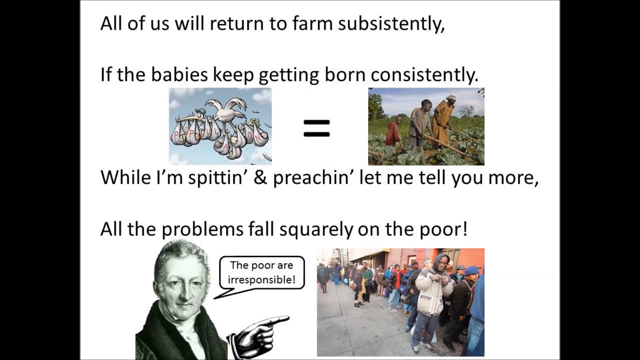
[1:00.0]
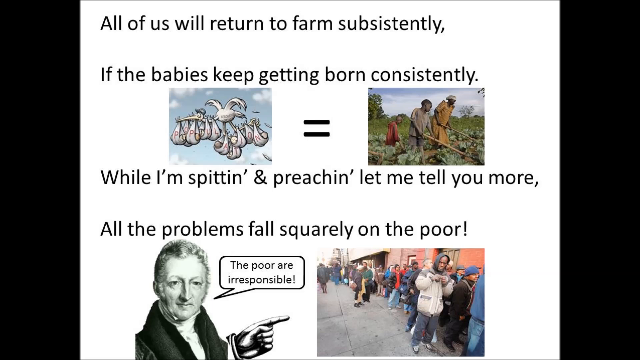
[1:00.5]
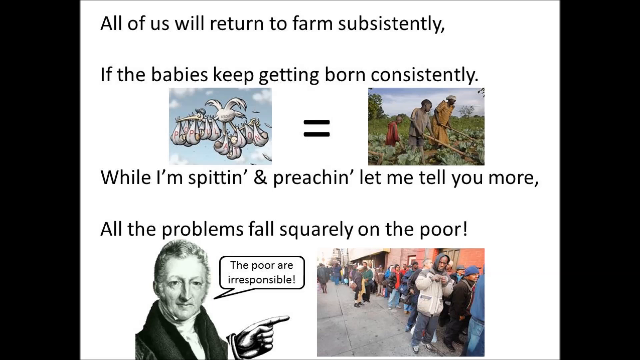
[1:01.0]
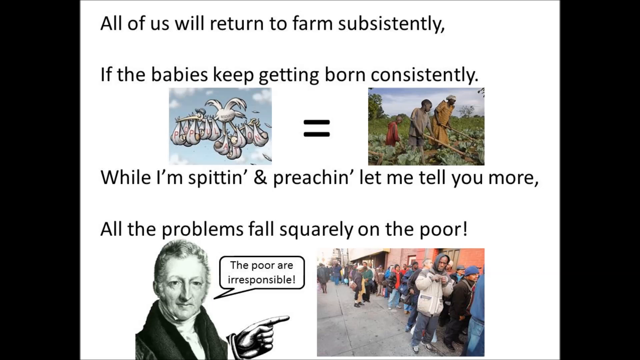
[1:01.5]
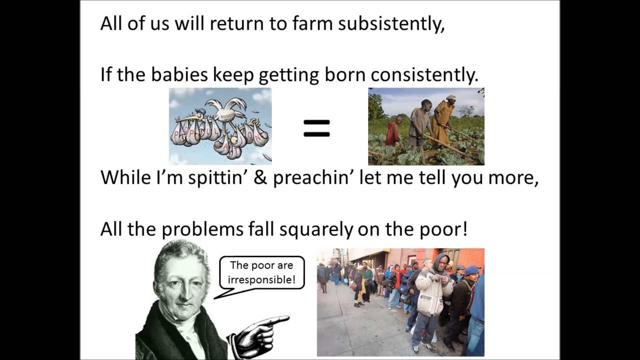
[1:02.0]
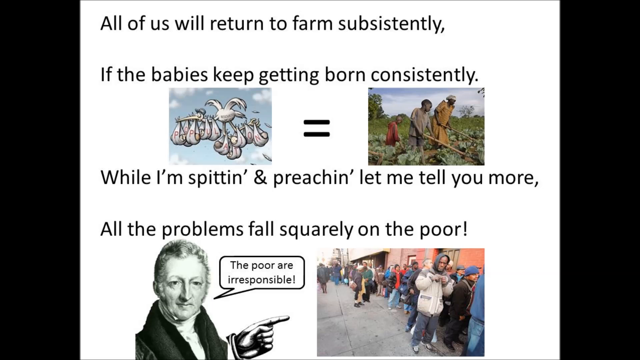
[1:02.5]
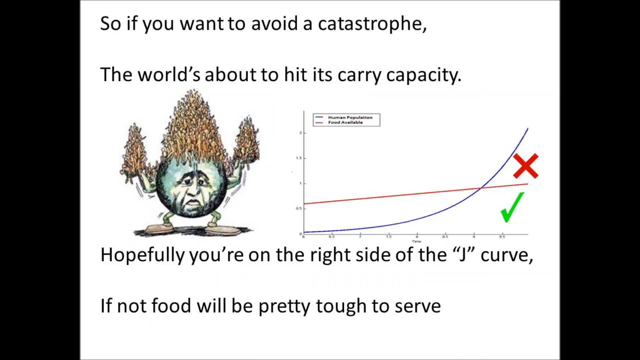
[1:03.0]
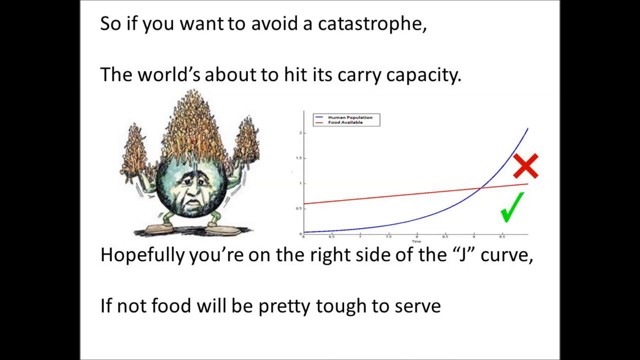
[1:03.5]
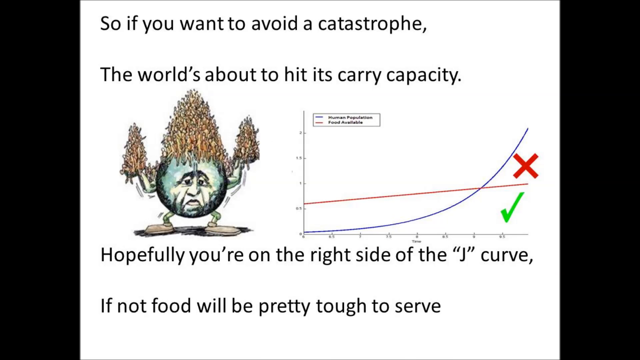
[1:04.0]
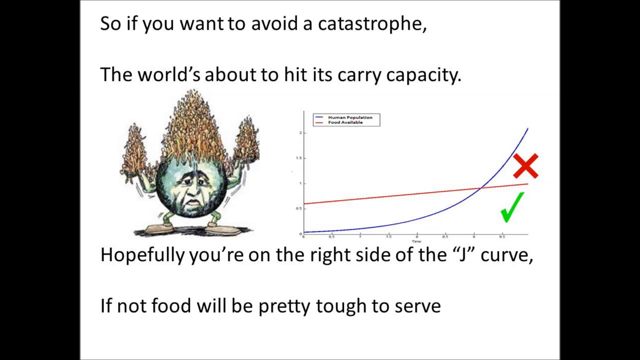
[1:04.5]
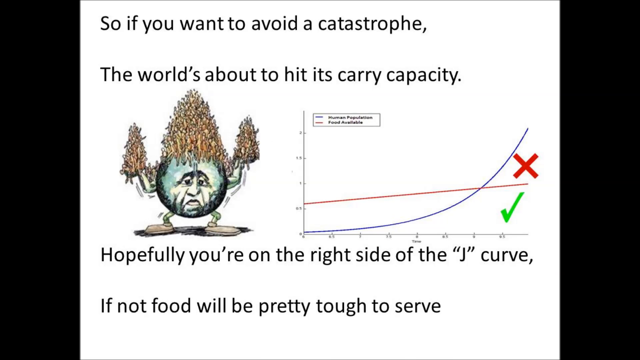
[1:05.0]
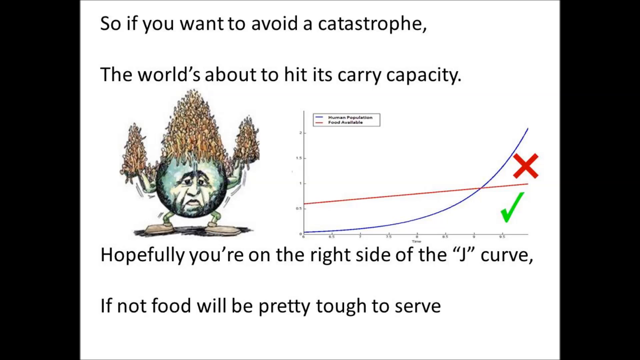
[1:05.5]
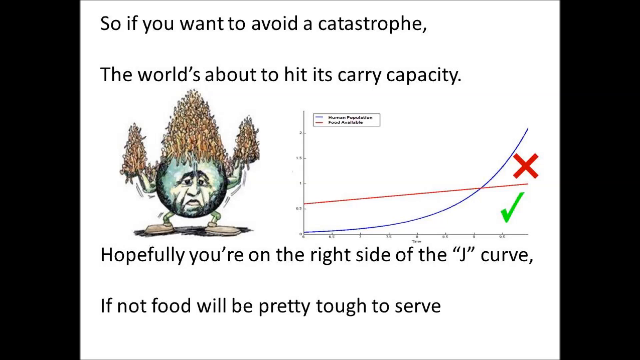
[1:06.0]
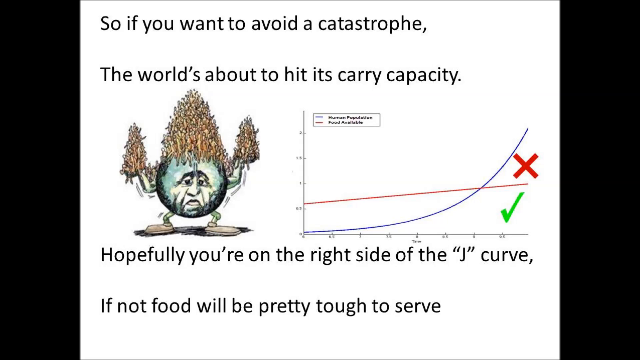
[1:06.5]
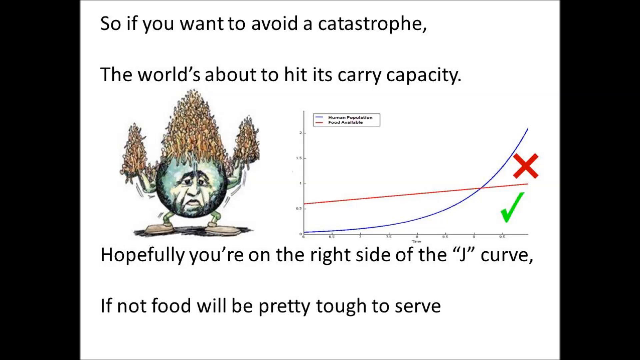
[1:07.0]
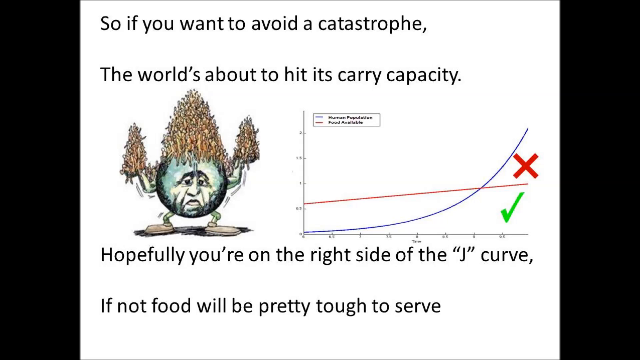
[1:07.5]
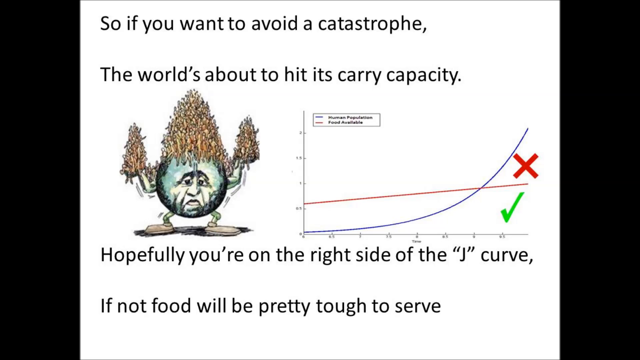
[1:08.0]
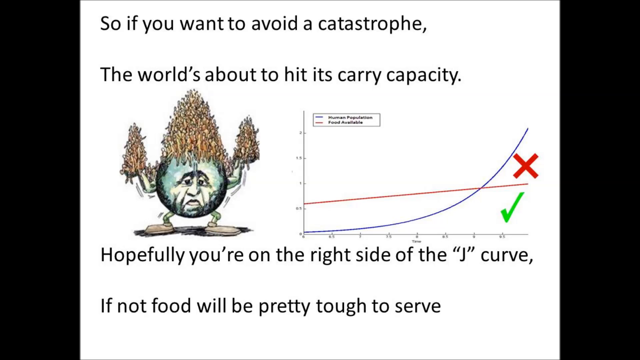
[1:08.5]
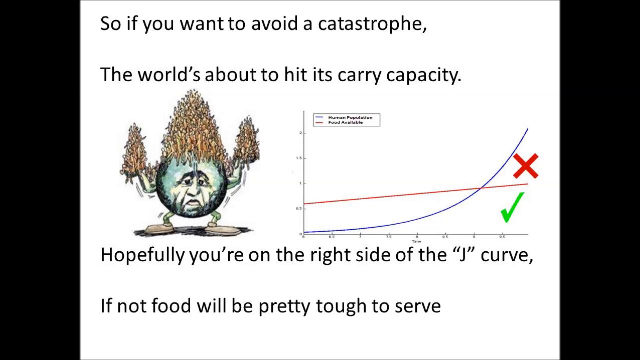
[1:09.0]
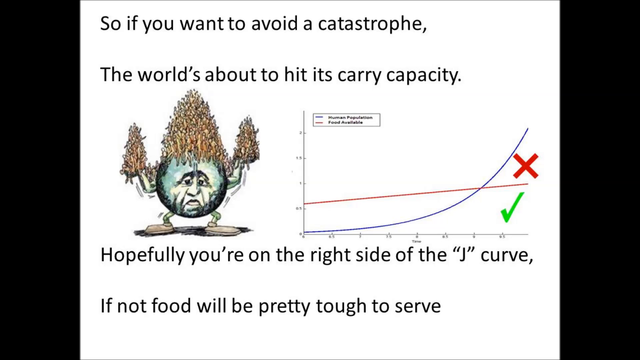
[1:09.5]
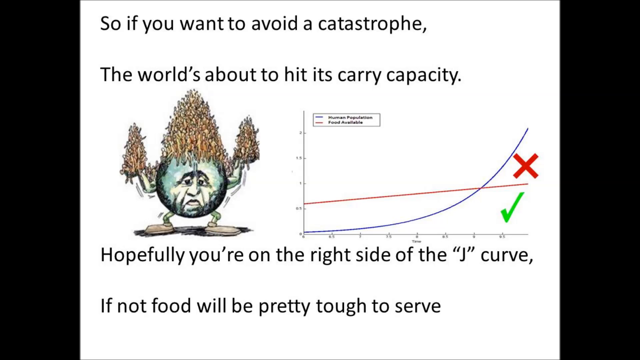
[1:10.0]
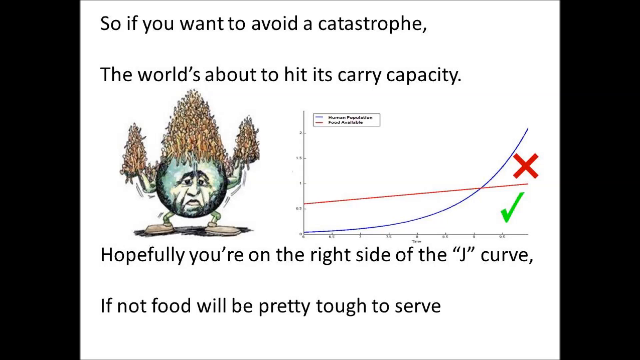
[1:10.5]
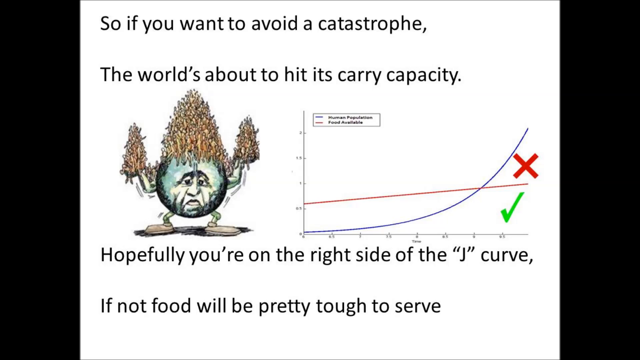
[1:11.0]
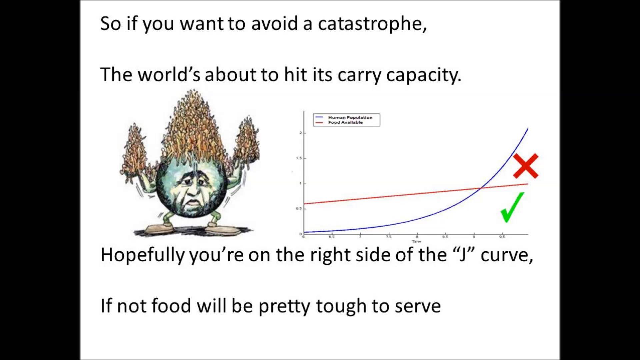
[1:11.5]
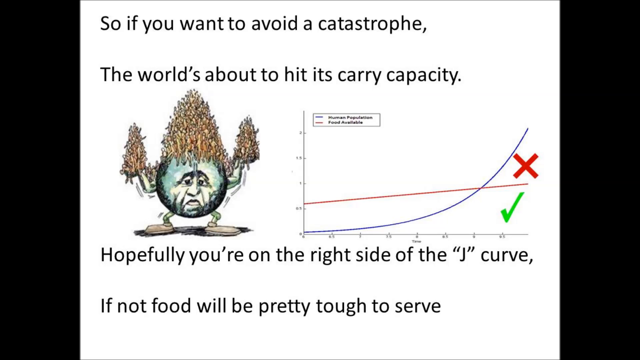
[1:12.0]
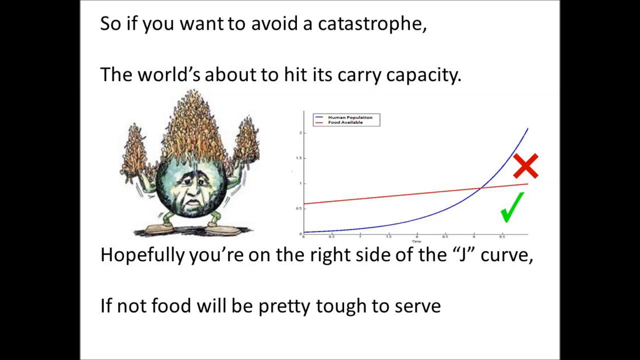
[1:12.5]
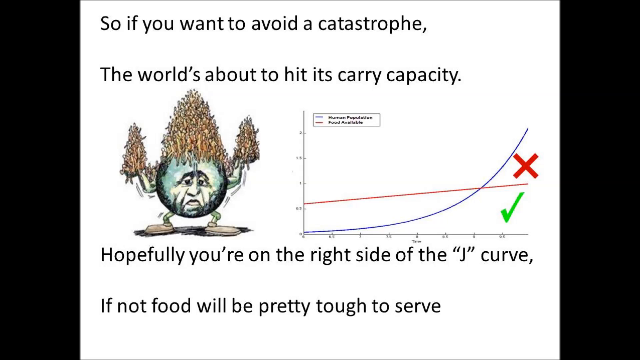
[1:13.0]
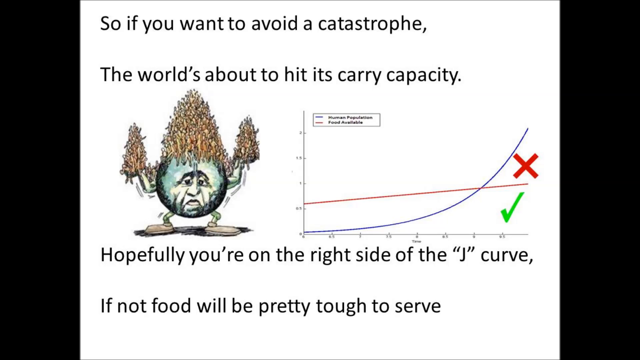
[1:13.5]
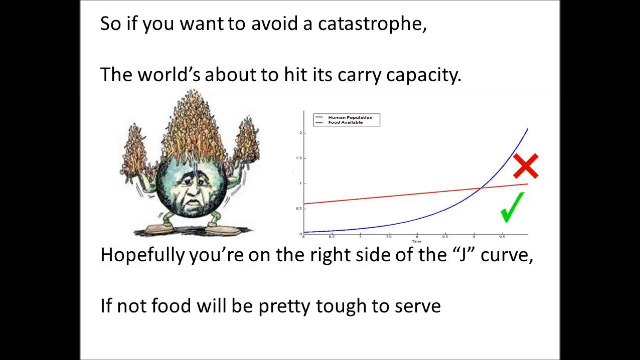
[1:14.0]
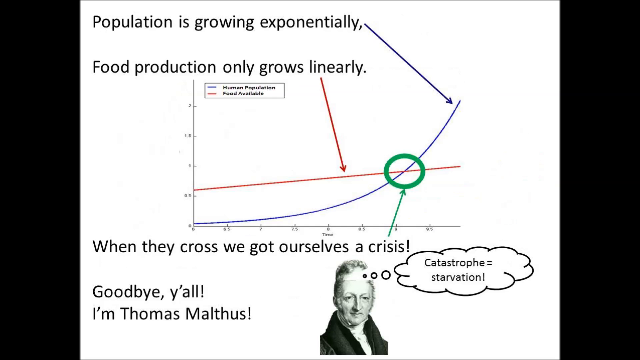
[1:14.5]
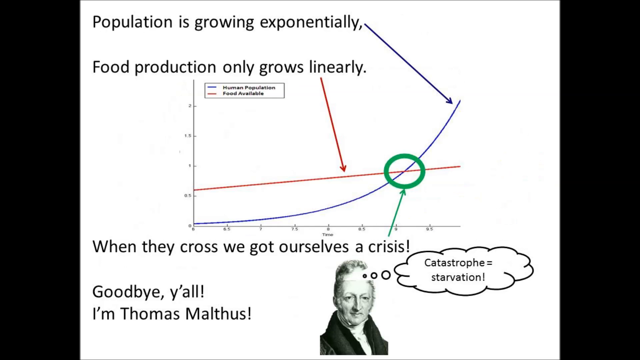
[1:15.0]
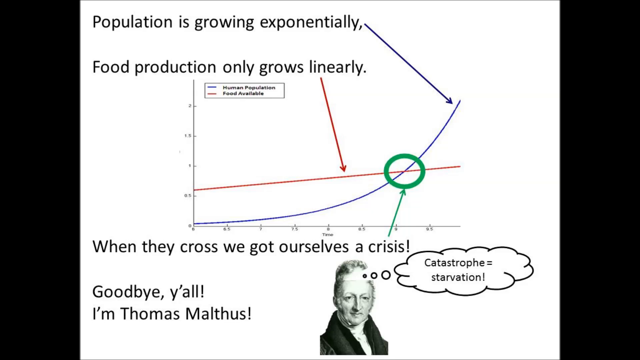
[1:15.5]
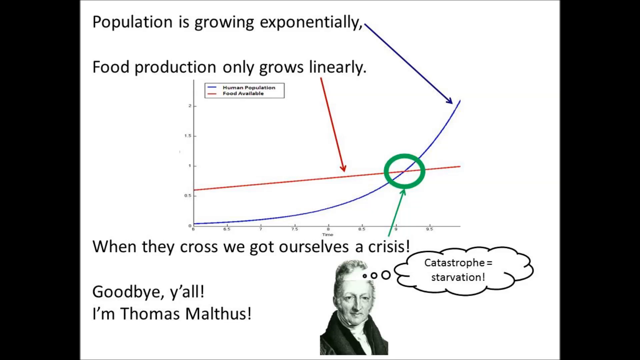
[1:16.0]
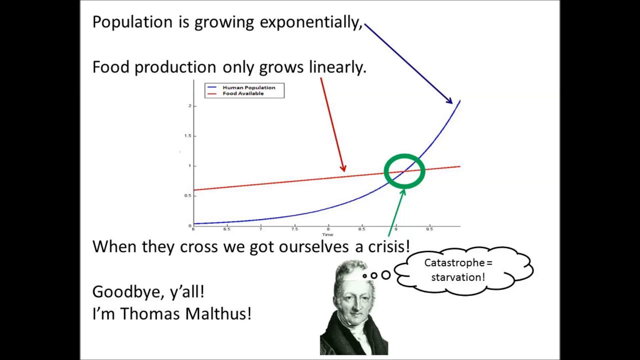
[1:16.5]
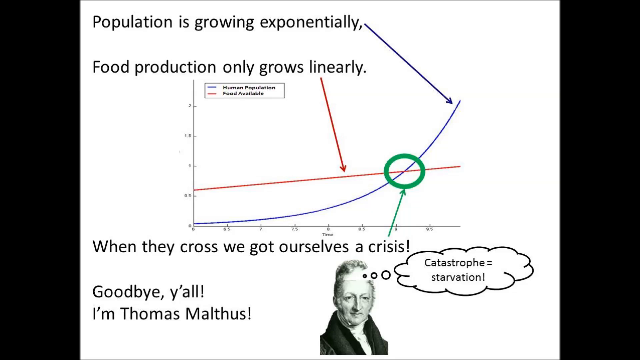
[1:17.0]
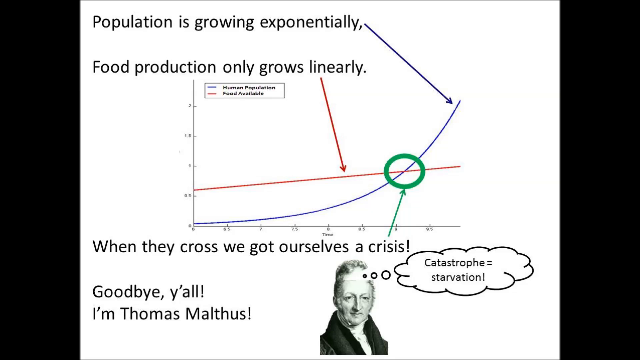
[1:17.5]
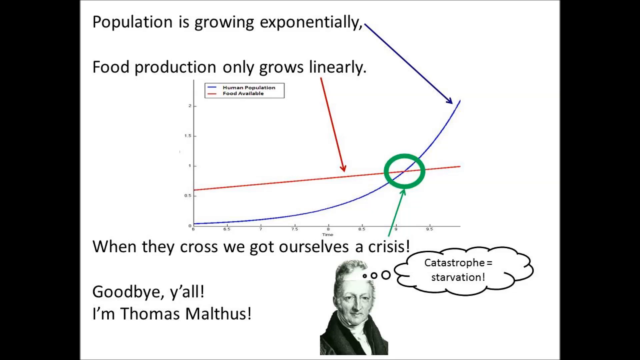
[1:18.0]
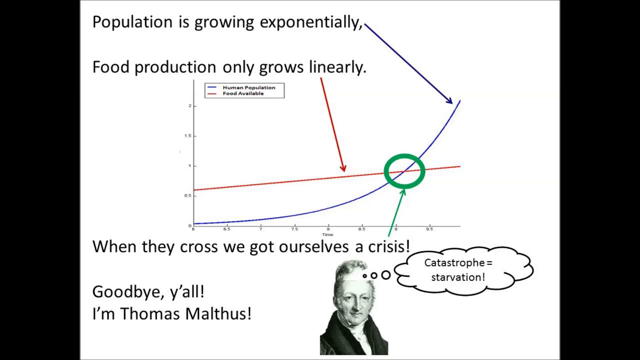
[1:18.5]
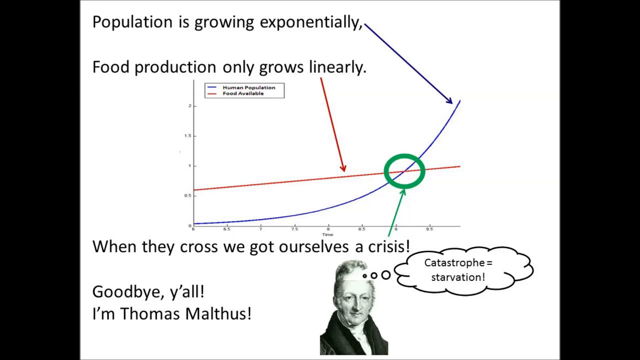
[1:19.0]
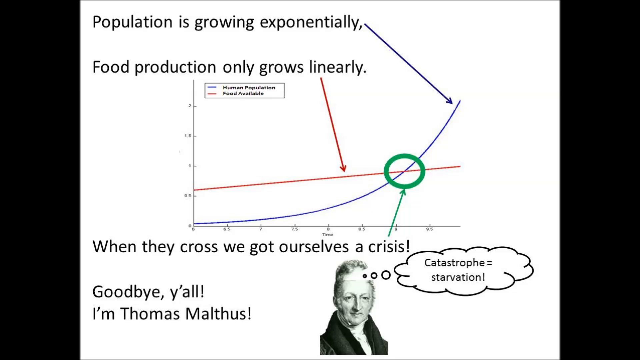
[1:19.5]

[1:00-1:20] A white pop-up screen shows the words "all of us will return to farm subsistently if the babies keep getting born consistently" at the top. Beneath this is an image of a stork carrying numerous babies in its claws, an equal sign in the middle, and next to it some people working out in a field, apparently clearing weeds away from a growing crop. Beneath this are the words "while I'm spitting and preaching, let me tell you more," and underneath those, "all the problems fall squarely on the floor." At the bottom of the screen, people stand in a line next to a brick building, looking like they are in a food line. The scene changes to text about avoiding catastrophe and the world being about to hit its carry capacity. A graph is on the right side of the screen, with a red X and a green check mark underneath the X. Finally, another graph appears on the screen, showing that the X belongs at the right side of the J curve and the green check belongs at the straight red line.